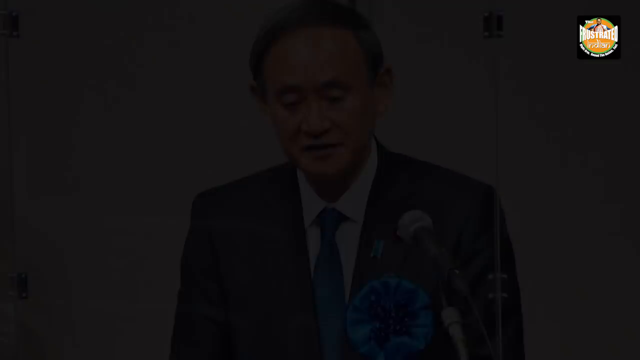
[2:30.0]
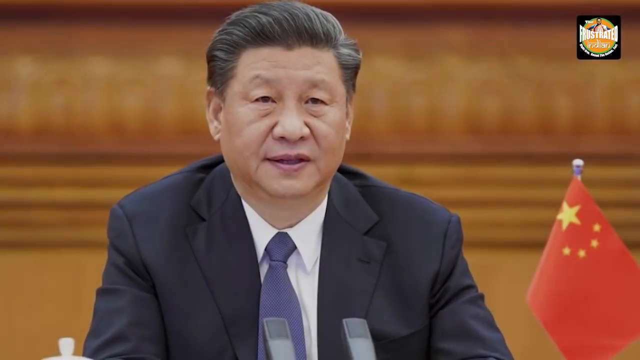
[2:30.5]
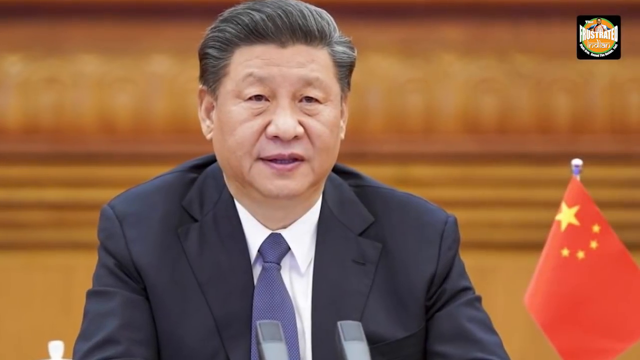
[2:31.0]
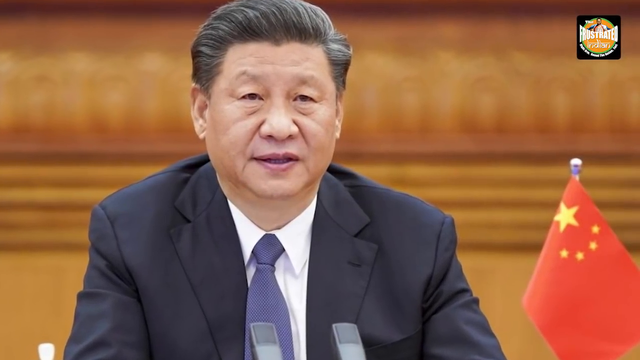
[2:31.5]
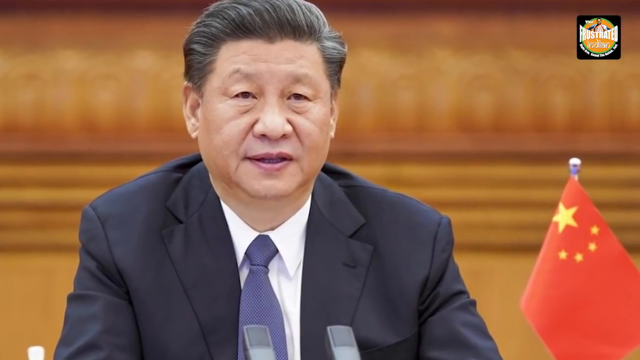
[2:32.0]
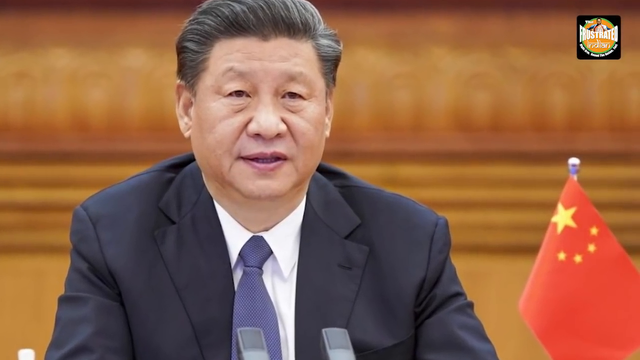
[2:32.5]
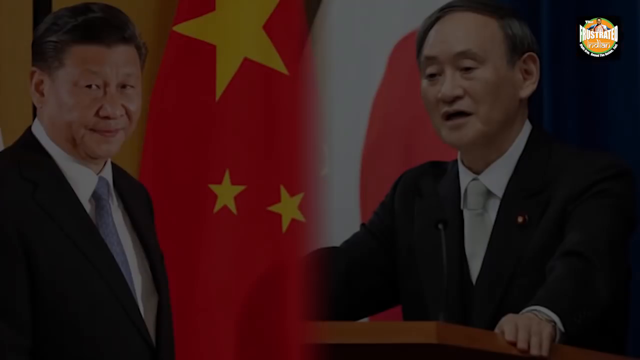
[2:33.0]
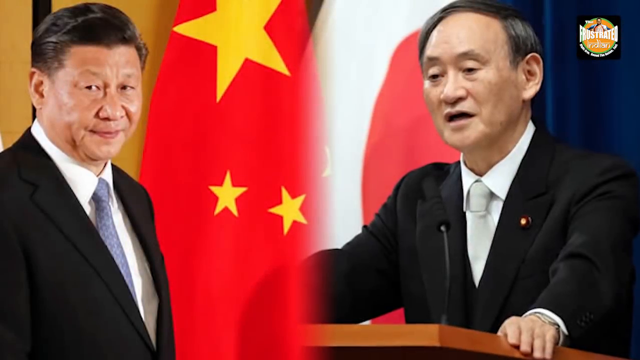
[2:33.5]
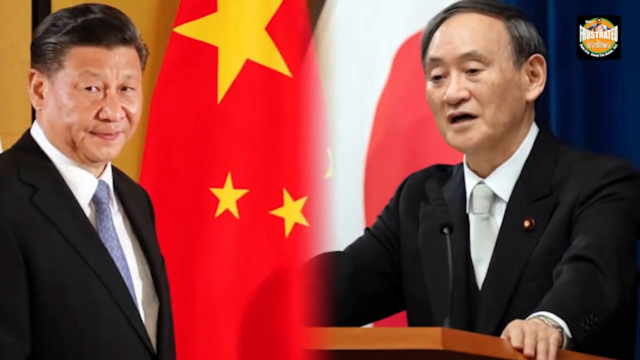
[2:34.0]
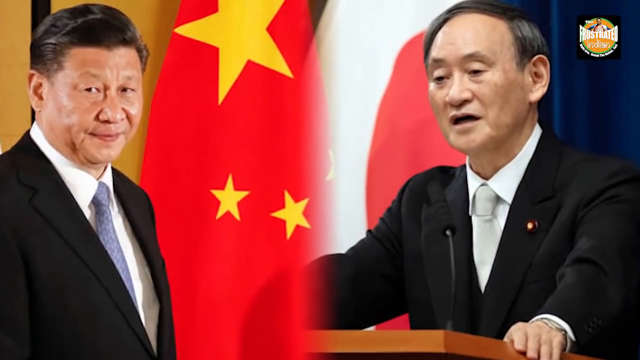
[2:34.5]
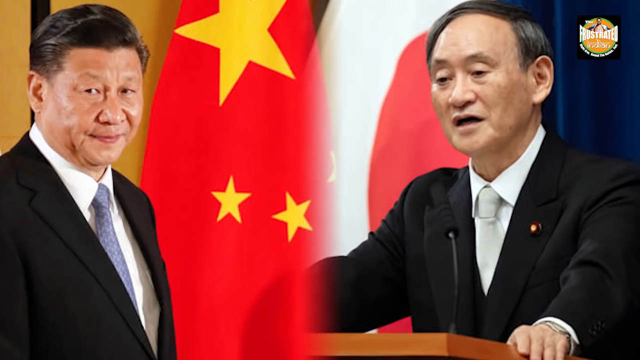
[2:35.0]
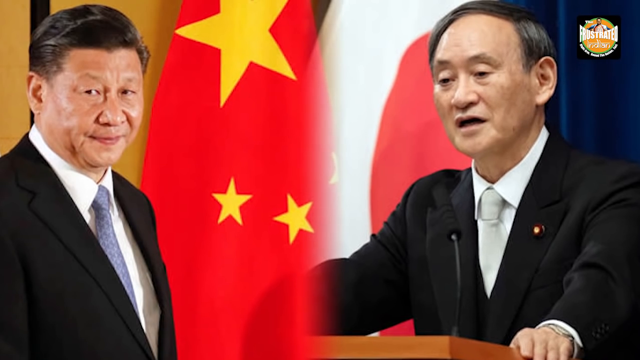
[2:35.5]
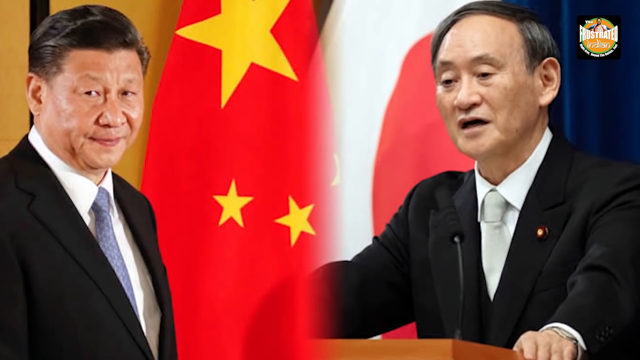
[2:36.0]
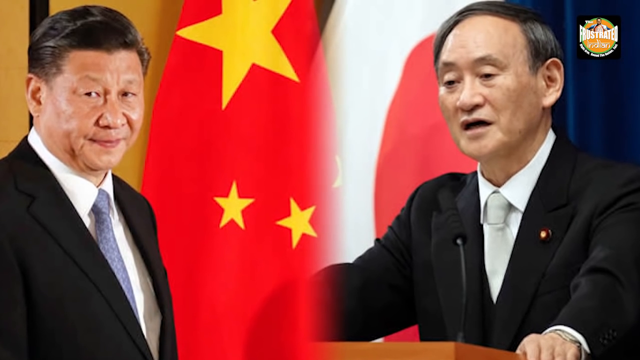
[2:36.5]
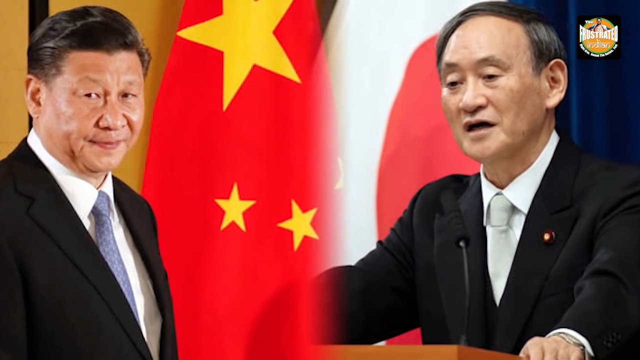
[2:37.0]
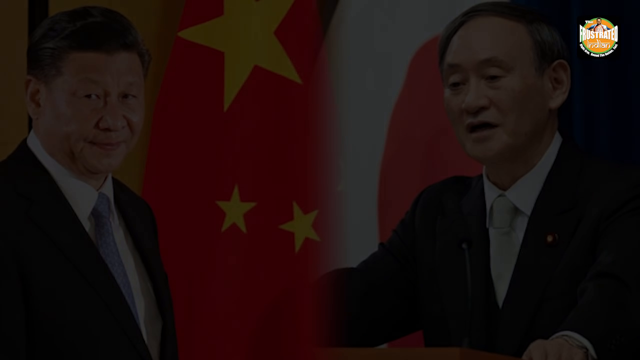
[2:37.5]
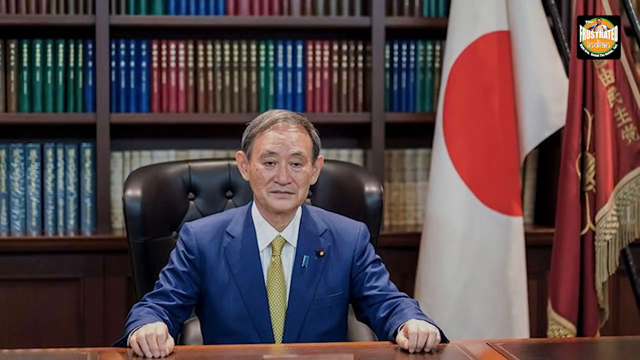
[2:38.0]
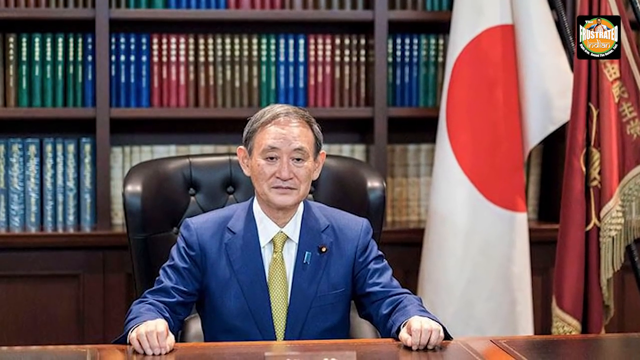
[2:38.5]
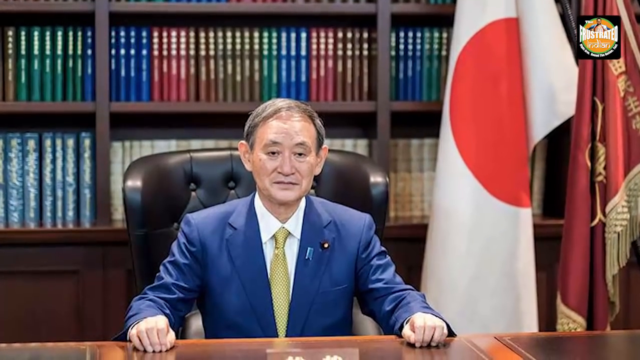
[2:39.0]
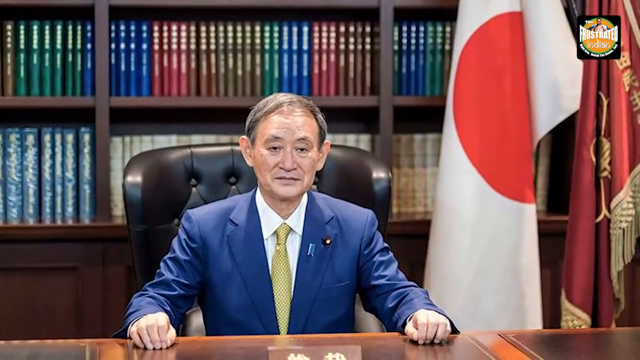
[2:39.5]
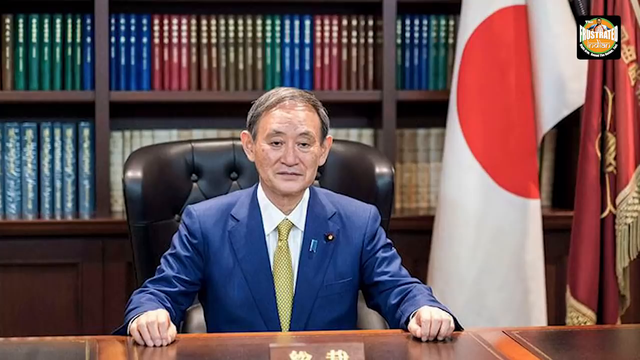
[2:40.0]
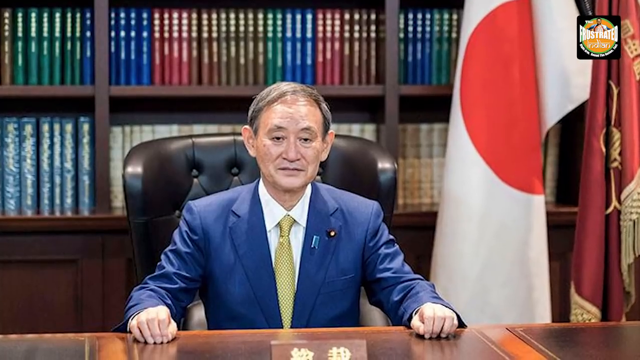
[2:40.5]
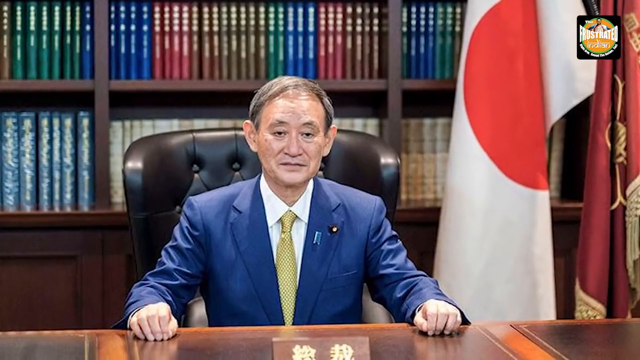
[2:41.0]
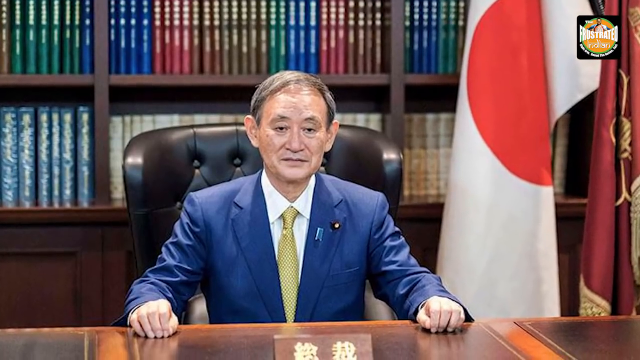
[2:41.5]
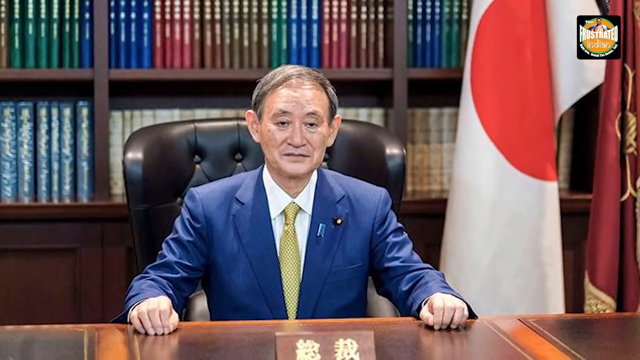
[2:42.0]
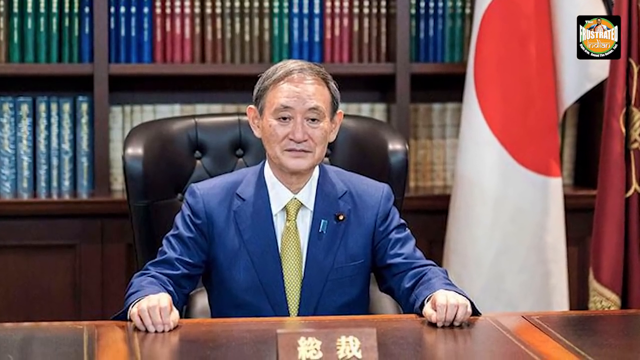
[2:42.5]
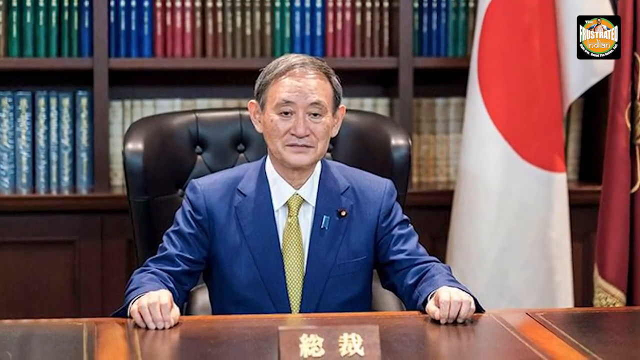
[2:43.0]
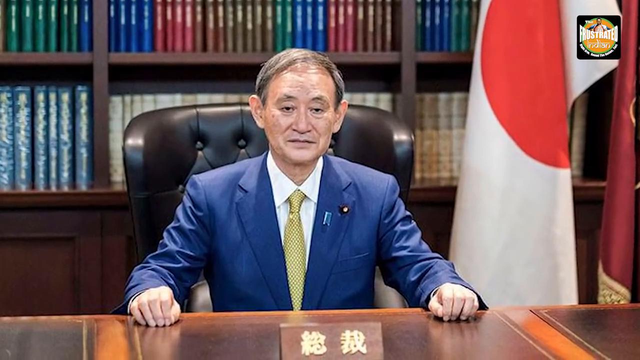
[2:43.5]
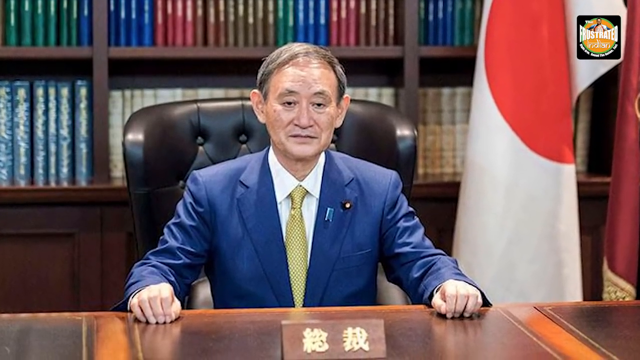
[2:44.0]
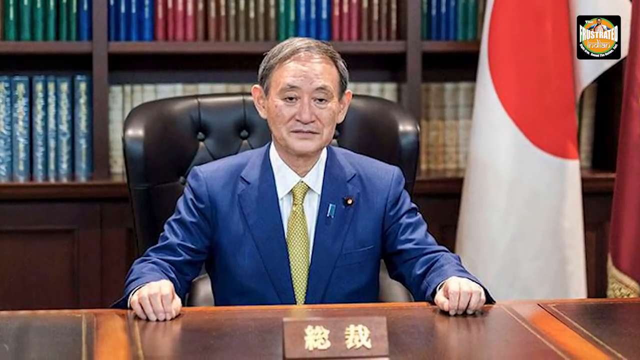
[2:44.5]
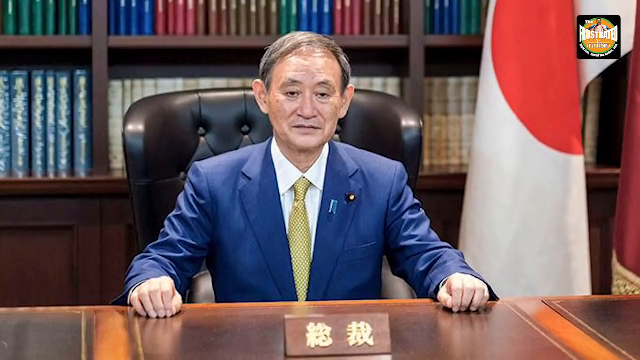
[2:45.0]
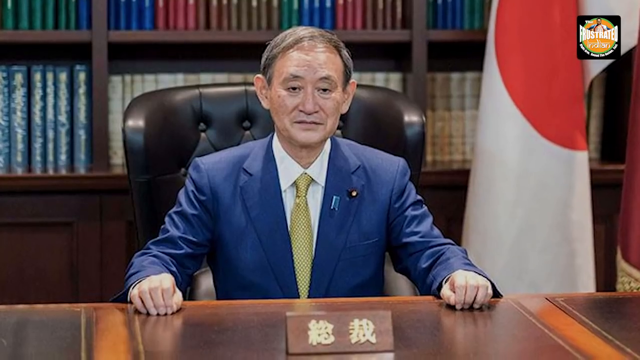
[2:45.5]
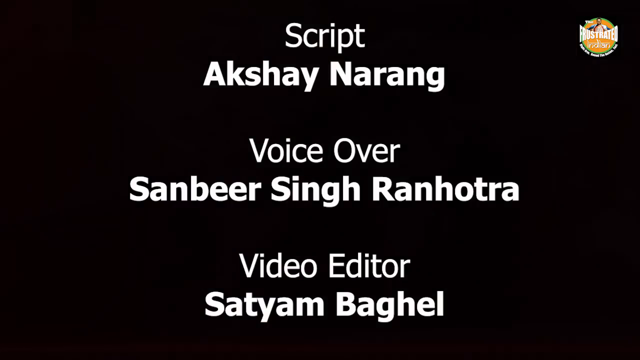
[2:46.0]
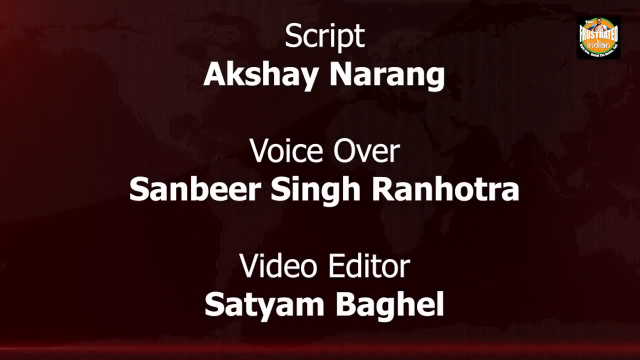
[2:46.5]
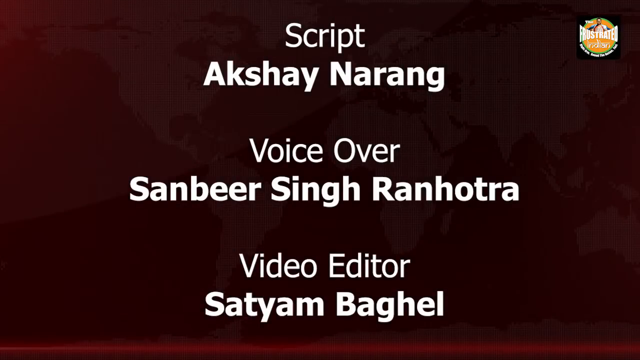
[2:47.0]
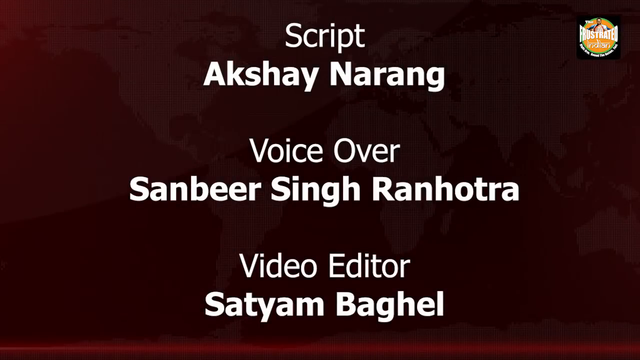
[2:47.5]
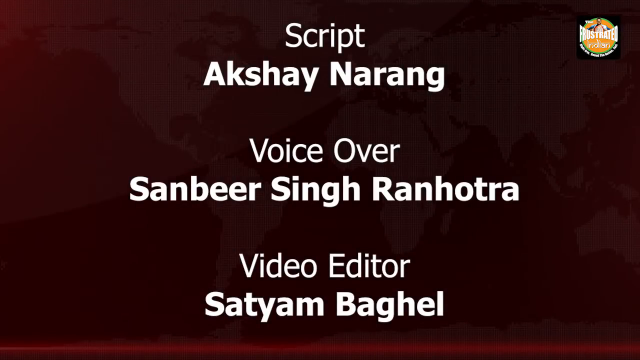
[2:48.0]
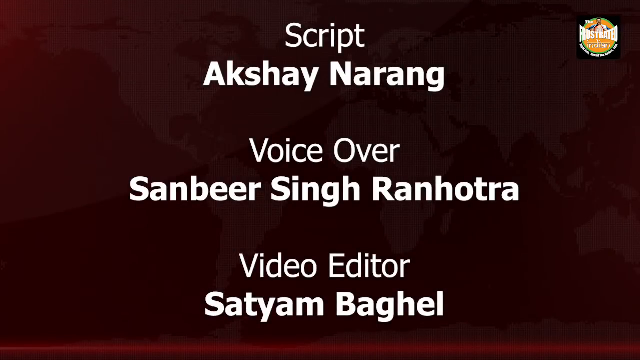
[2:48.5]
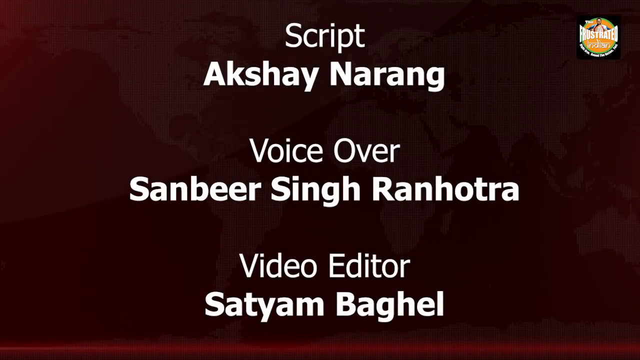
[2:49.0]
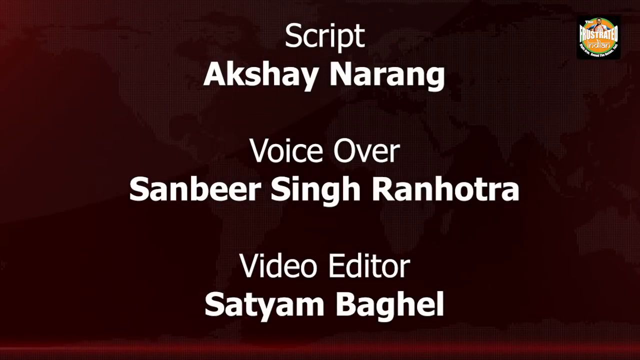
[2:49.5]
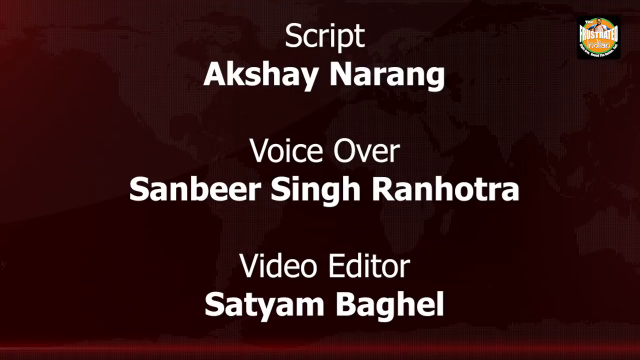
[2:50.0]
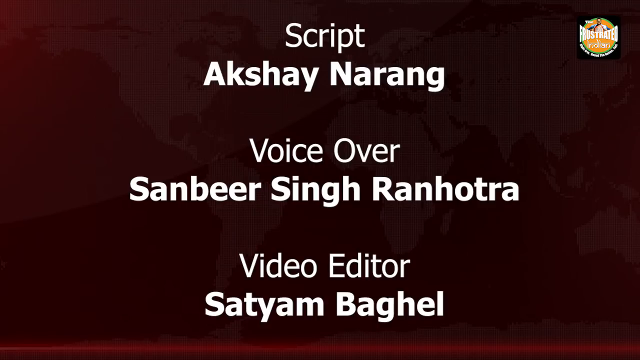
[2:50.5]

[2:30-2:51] A man in elegant clothes is shown in the center of the frame, wearing a dark jacket, a blue tie and a white shirt. At the bottom right there is a very small red flag with yellow stars inside it. Then two photos of two other men are shown, one at the far left of the frame and the other at the far right. Both wear elegant clothes: dark jackets, white shirts and colored ties. Behind each man there are flags of different colors: behind the man on the far left the flag is red and yellow, while behind the man on the right the flag is white and red, with a blue tent behind him as well.